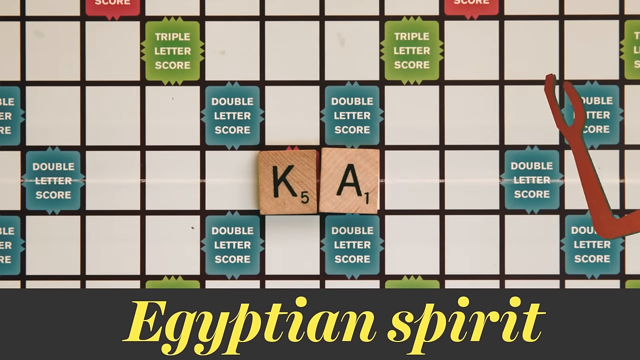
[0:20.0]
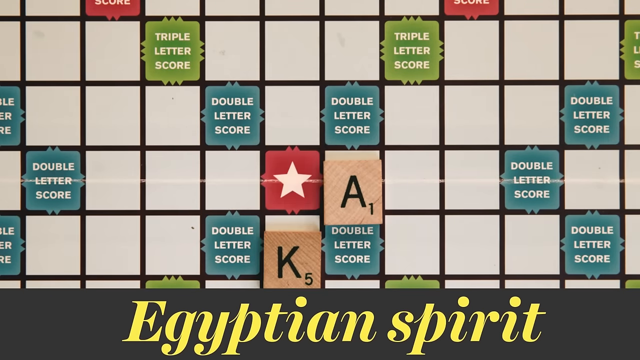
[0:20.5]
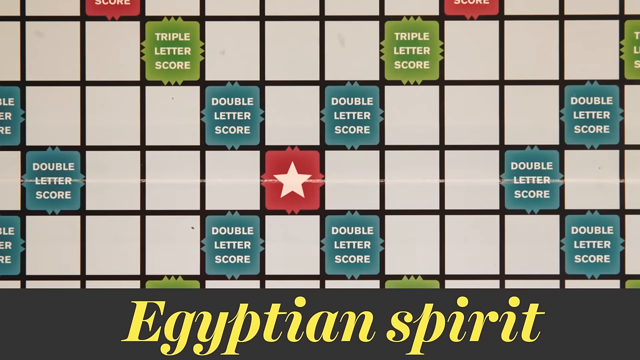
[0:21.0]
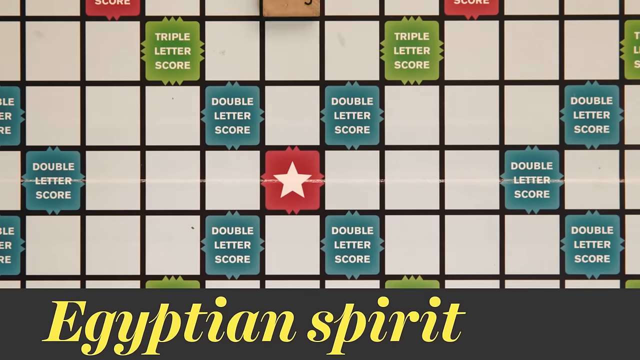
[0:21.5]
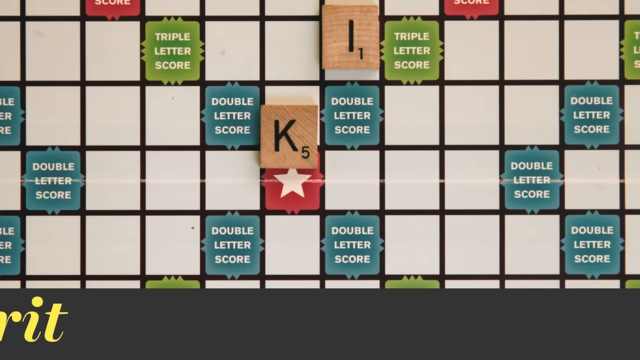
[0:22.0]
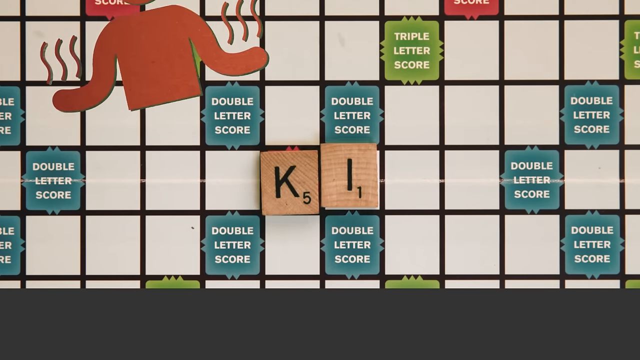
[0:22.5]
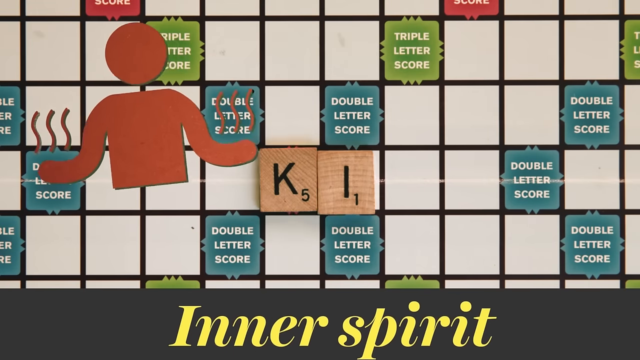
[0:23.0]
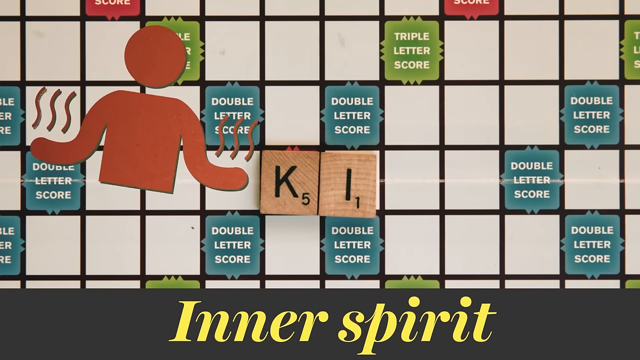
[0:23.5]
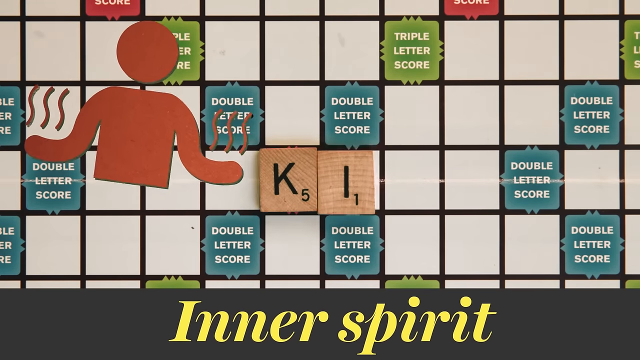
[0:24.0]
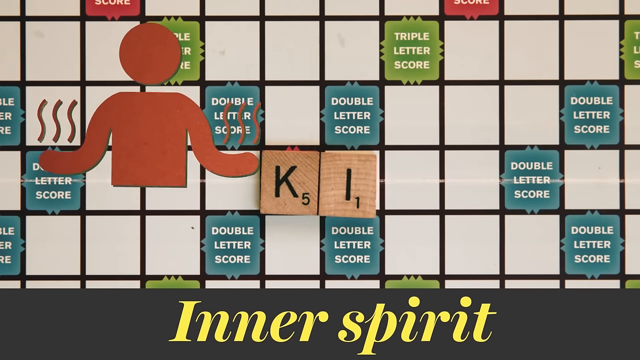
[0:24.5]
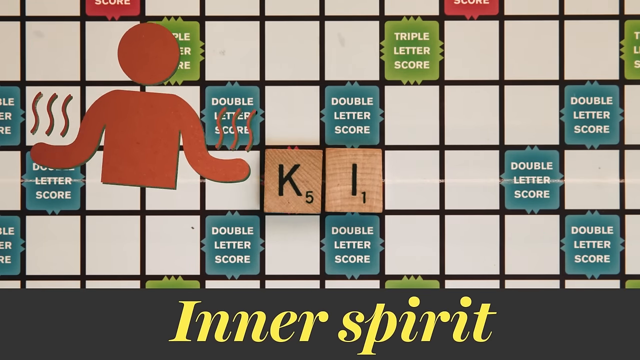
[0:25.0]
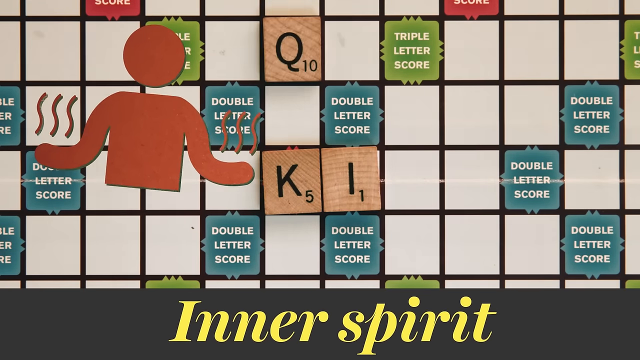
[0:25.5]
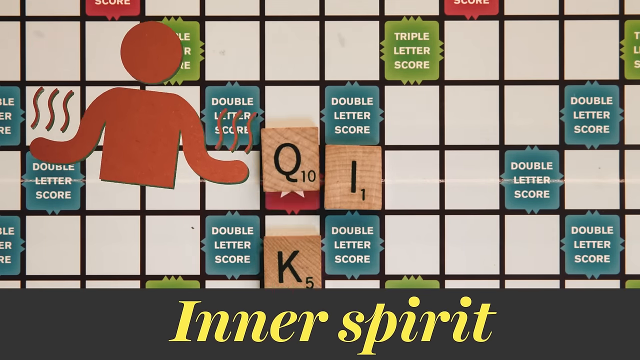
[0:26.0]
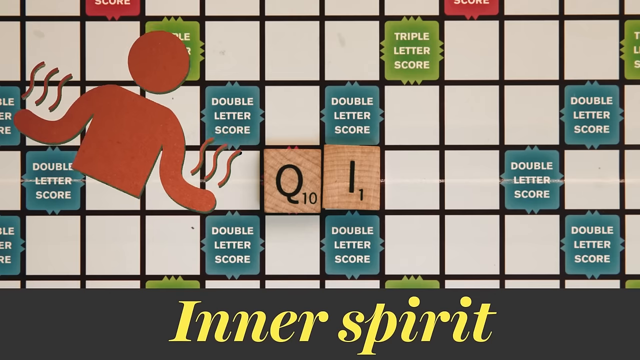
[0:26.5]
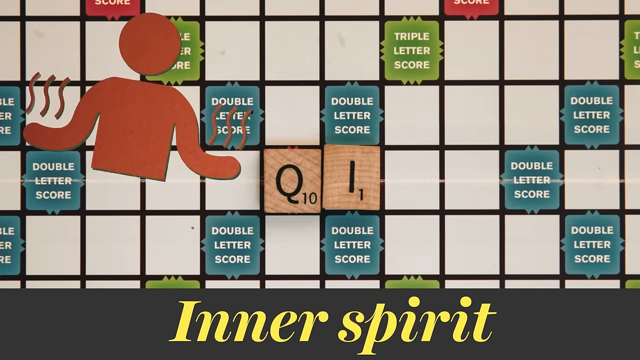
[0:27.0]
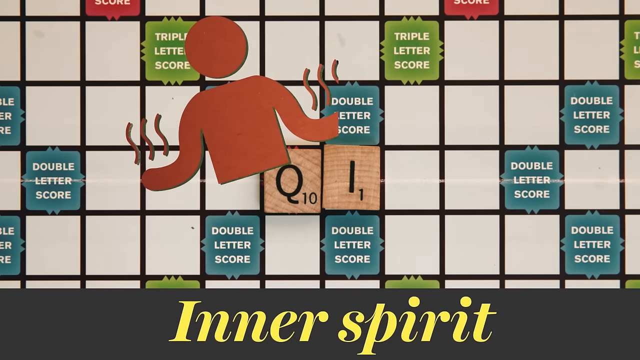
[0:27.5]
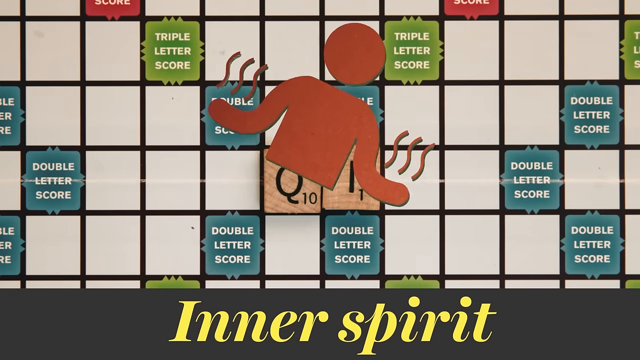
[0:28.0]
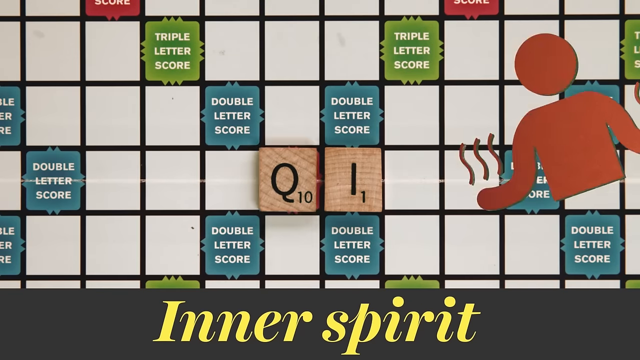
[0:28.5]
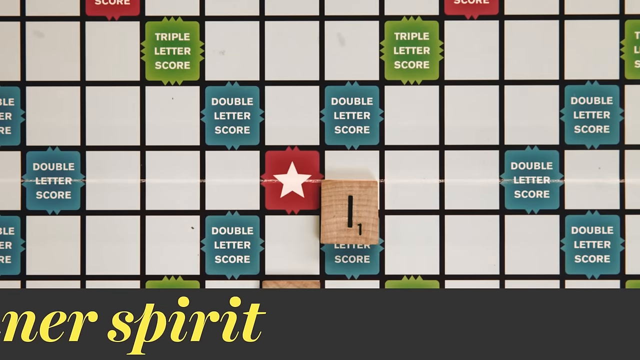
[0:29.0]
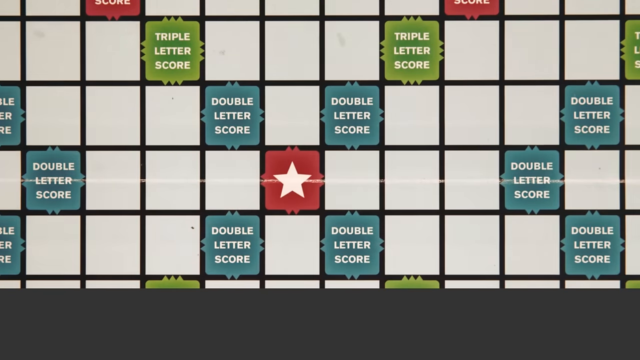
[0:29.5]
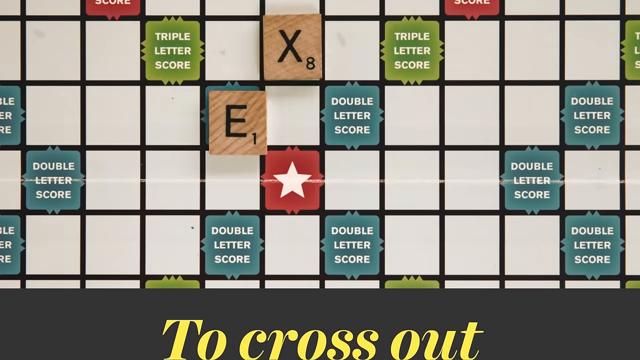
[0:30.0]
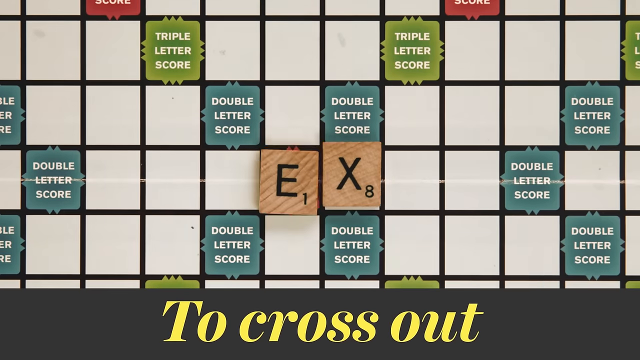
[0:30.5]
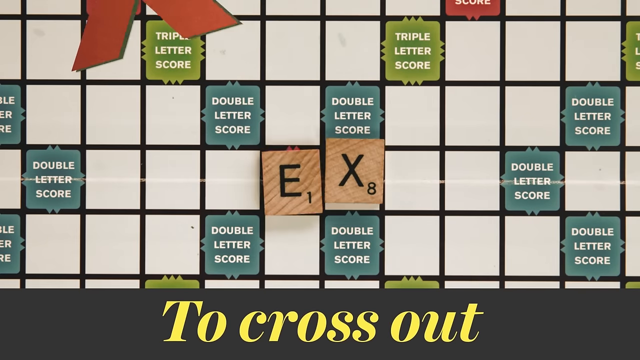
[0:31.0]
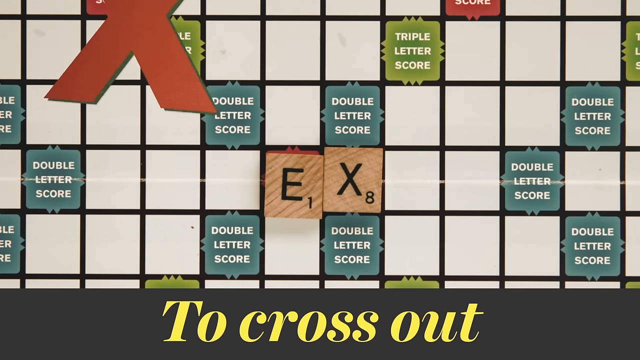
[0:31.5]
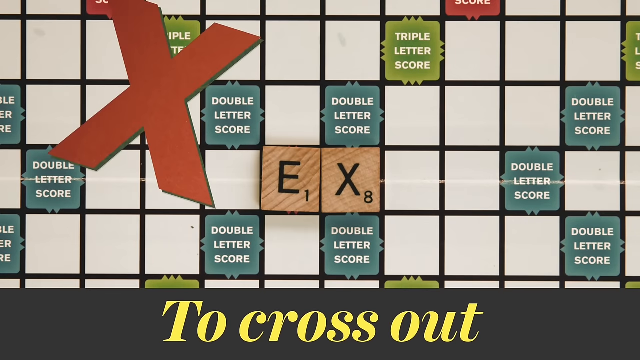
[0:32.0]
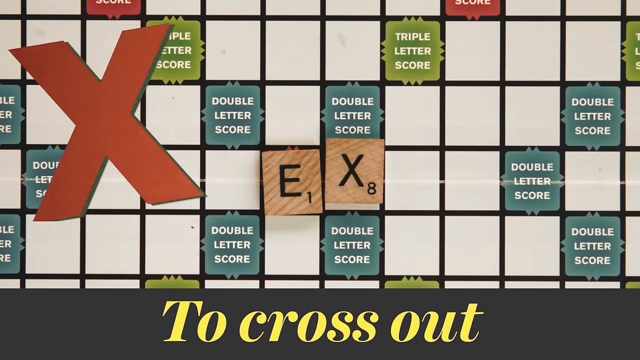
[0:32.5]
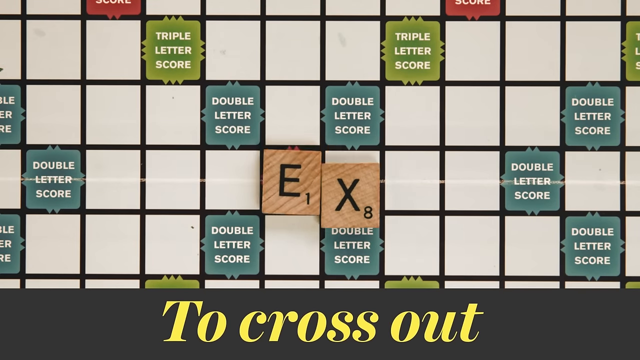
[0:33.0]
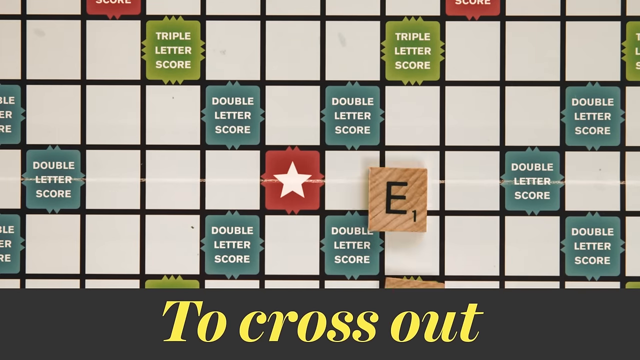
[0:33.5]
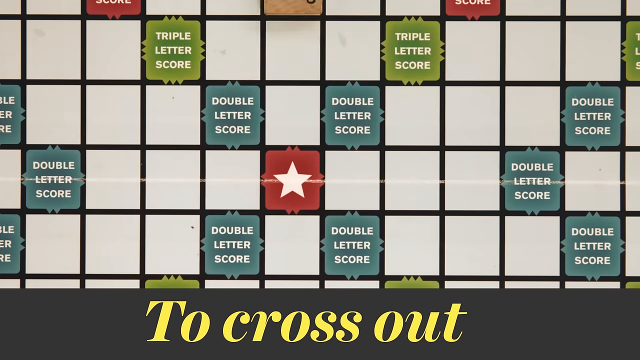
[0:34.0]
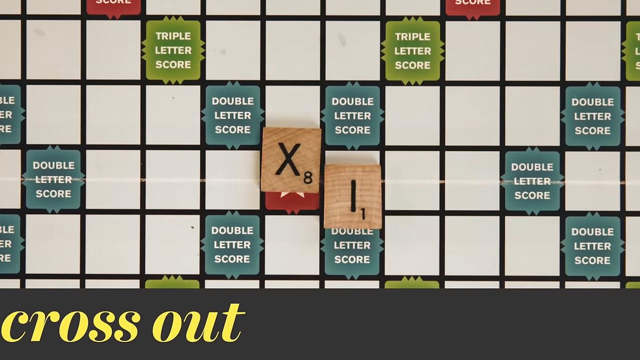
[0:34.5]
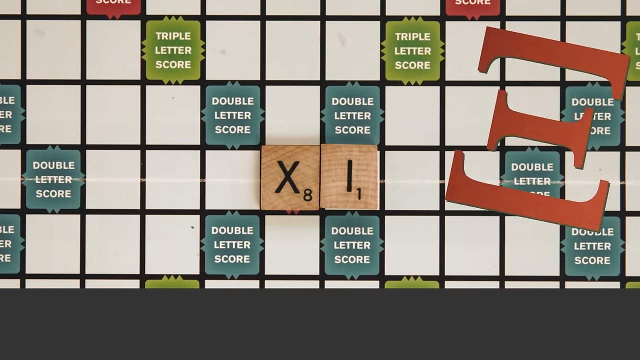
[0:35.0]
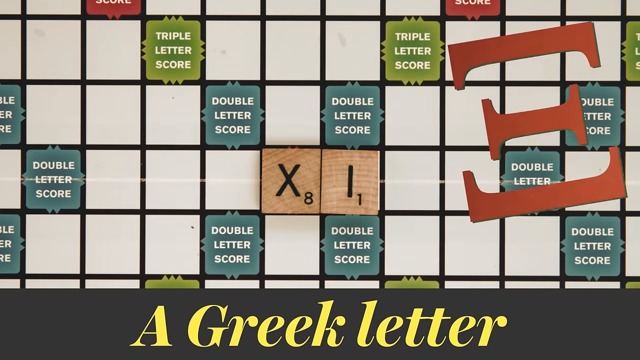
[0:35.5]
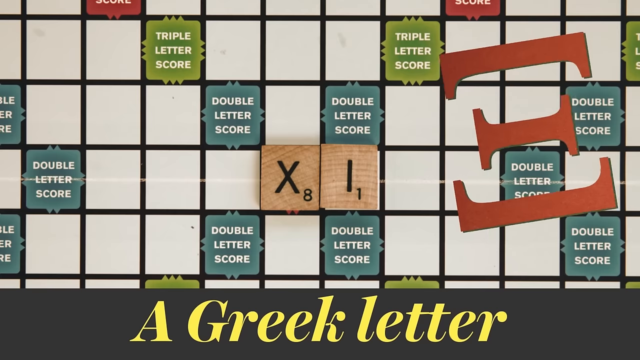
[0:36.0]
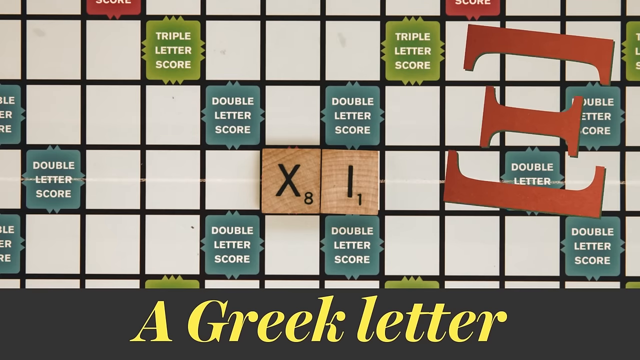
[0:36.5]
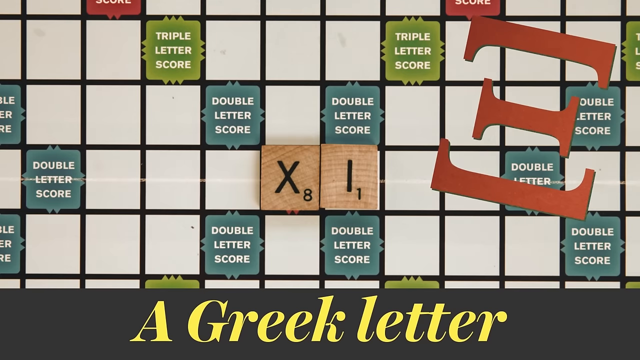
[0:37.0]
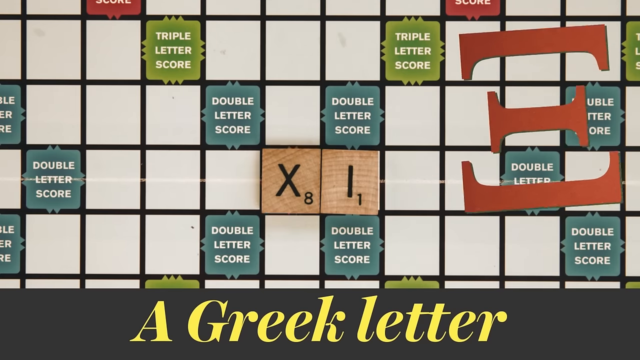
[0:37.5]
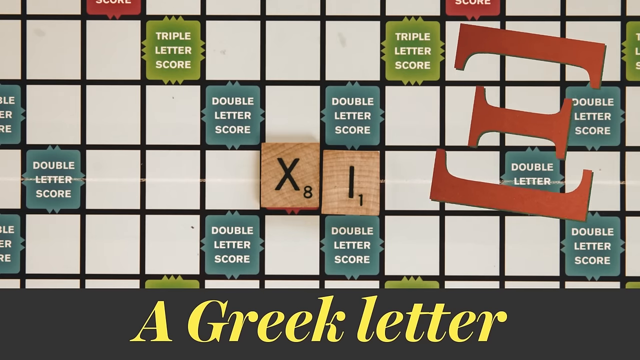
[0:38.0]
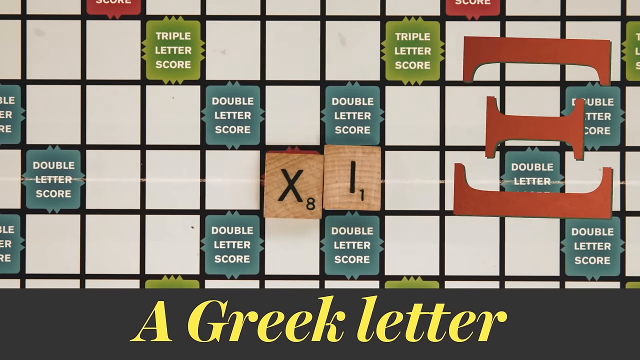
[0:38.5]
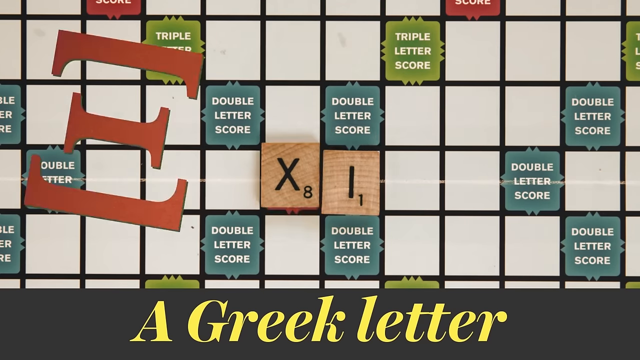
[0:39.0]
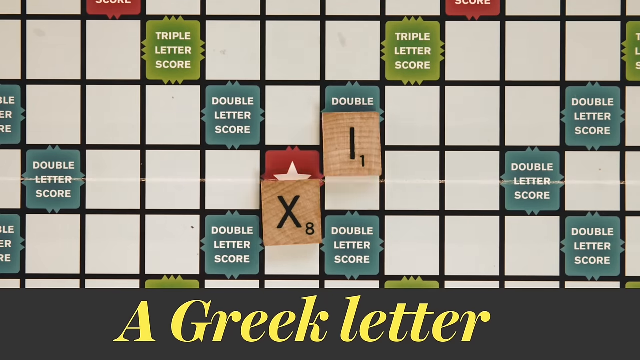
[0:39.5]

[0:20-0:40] The video continues through two-letter Scrabble words. It cuts to KI with the description "inner spirit," then switches to QI, "inner spirit." Next it shows X, with yellow text at the bottom meaning "to cross out" and a red X. It then cuts to XI, and the yellow text at the bottom now reads "a Greek letter for the letter I."